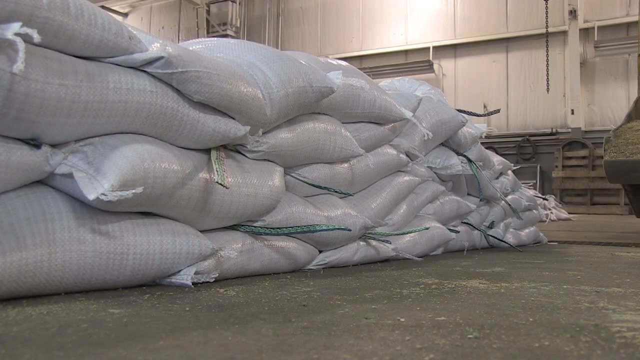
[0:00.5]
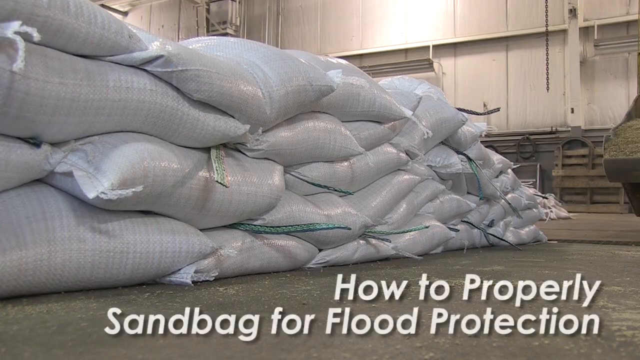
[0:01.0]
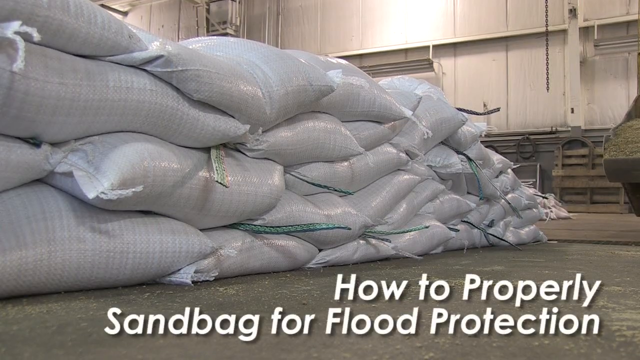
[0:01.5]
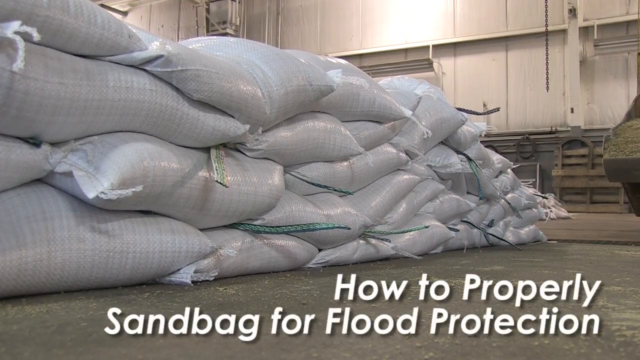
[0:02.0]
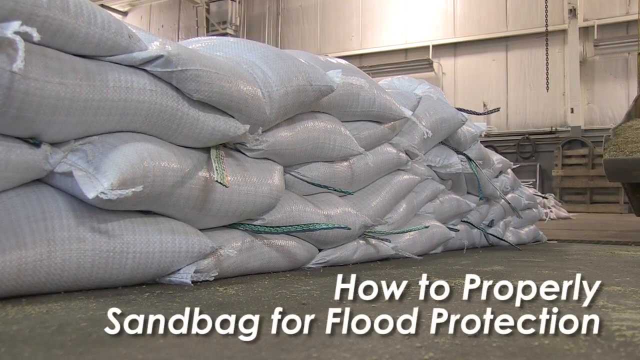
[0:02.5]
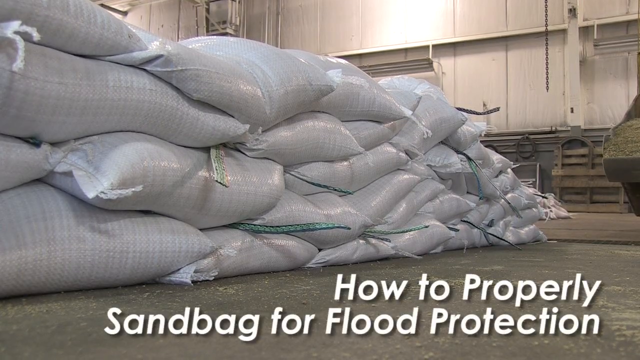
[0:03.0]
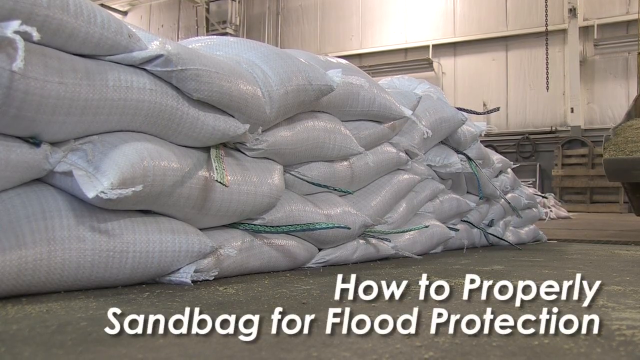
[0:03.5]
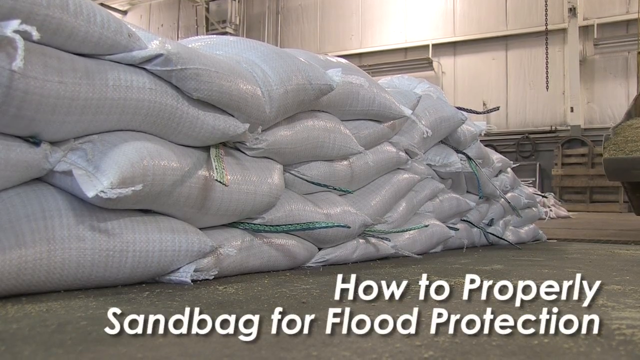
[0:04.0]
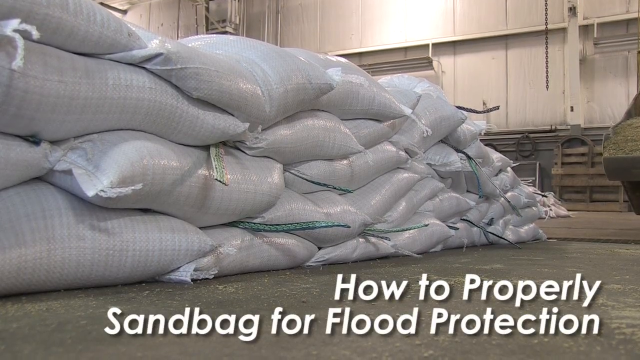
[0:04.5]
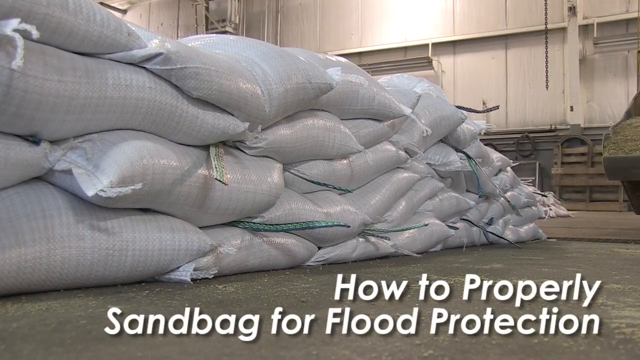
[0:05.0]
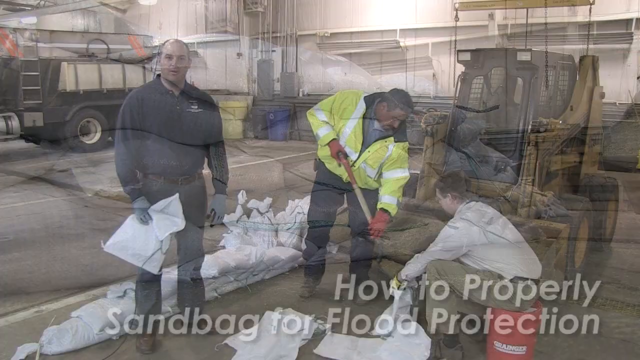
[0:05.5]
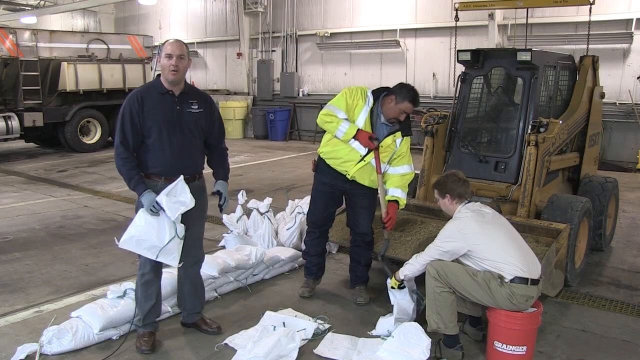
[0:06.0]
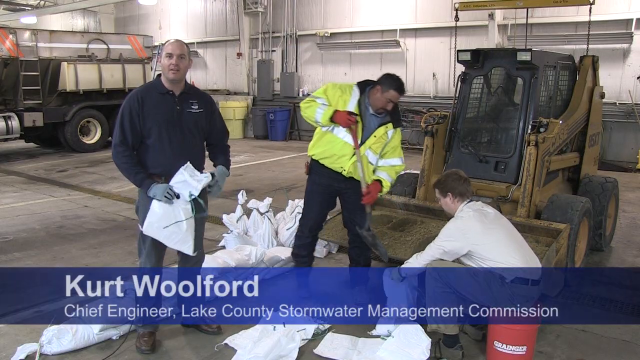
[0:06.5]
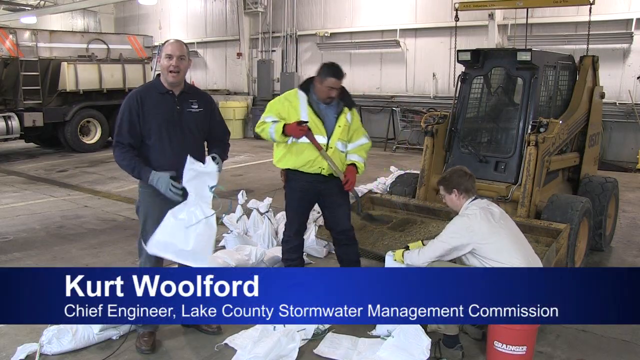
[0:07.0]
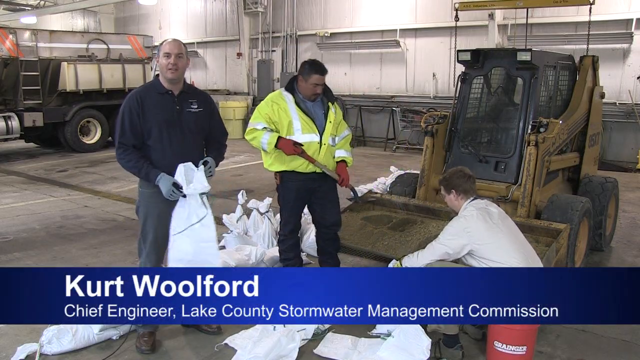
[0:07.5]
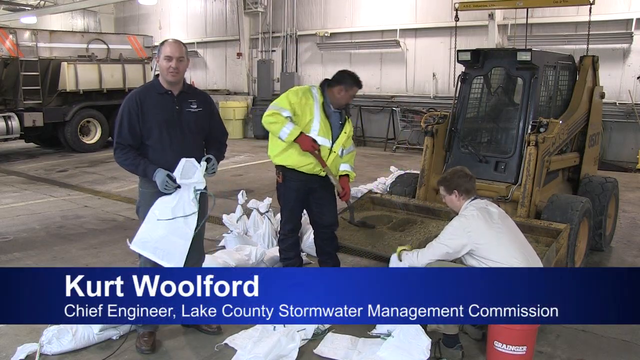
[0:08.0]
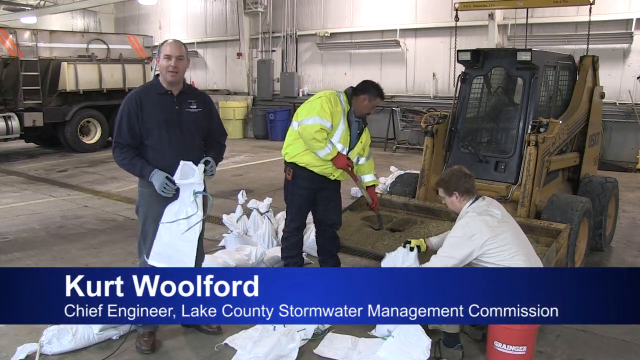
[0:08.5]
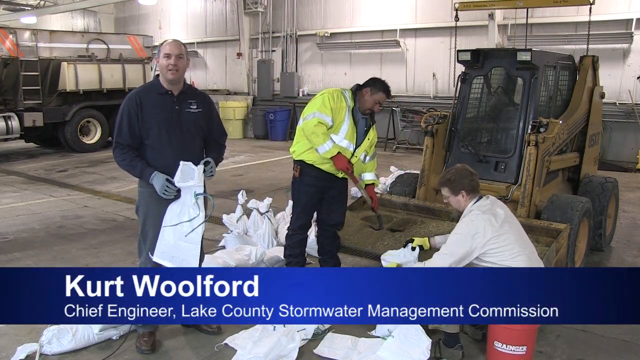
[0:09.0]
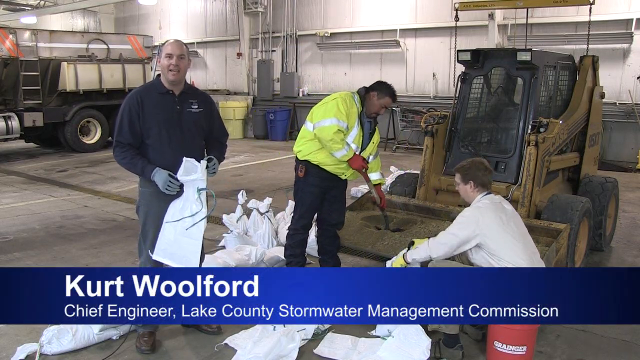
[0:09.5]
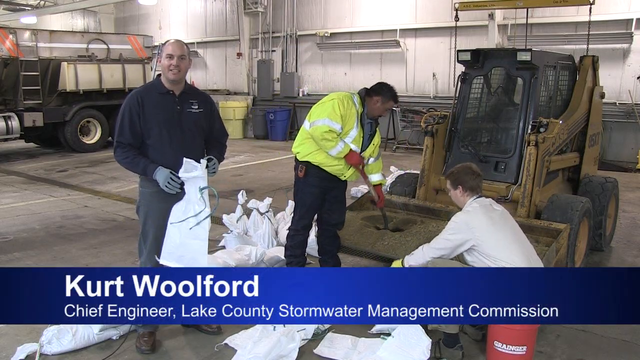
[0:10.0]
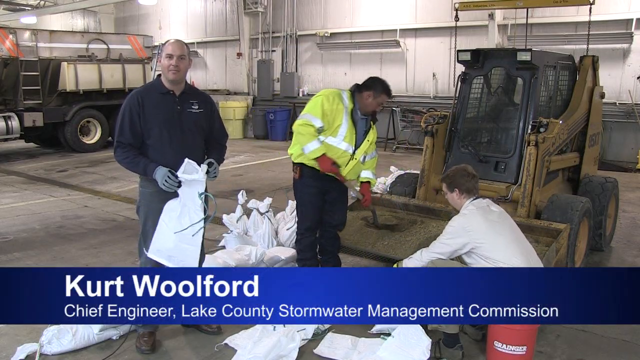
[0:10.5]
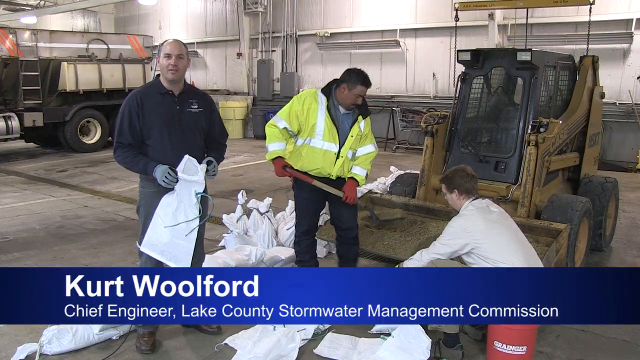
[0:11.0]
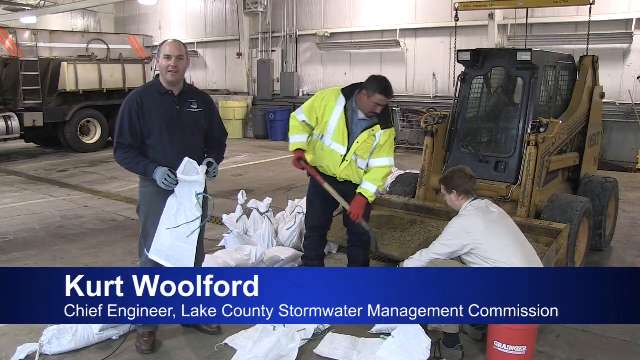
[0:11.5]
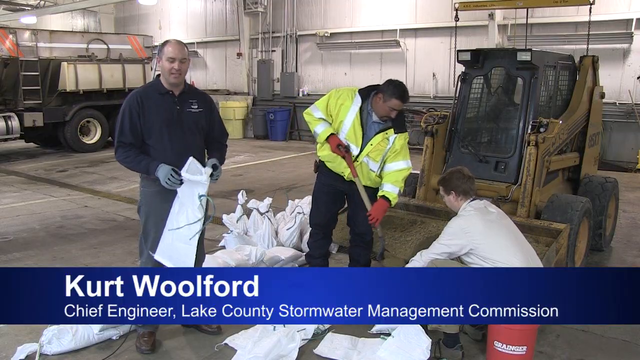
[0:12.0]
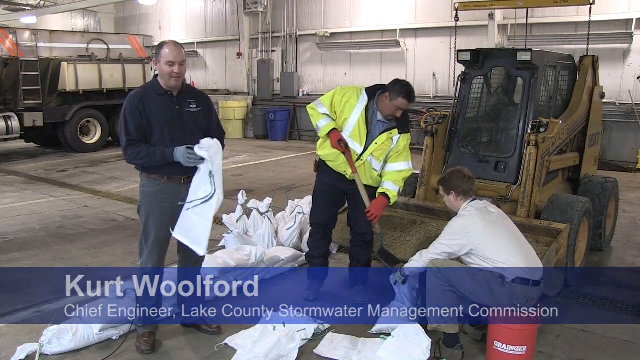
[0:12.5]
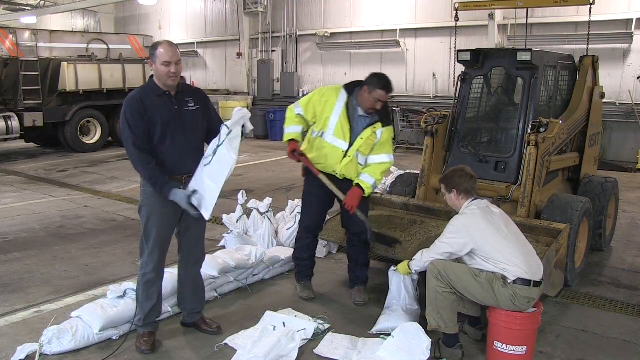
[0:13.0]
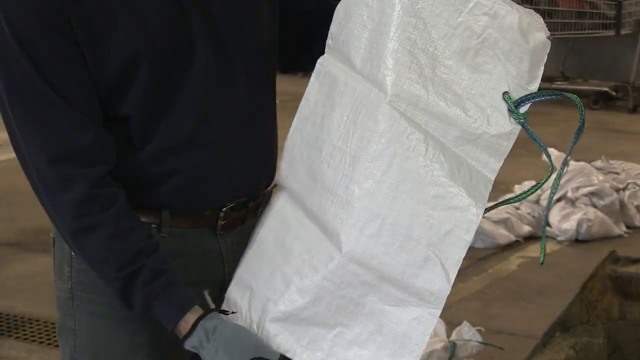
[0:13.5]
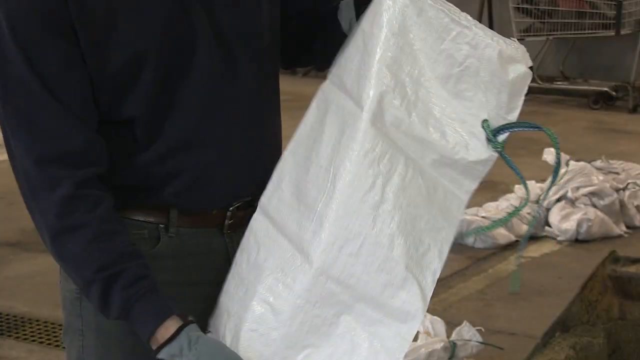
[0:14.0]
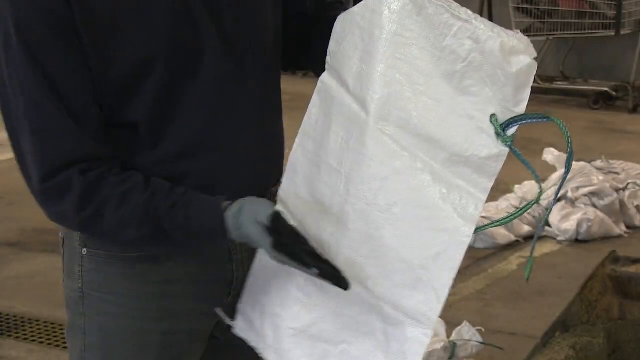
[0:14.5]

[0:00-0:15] The video opens with a title picture of filled sandbags and the words "How to properly sandbag for flood protection". A speaker from a county stormwater management begins talking. He holds an empty sandbag while, behind him, two people work to fill a sandbag. The scene is inside a warehouse with plenty of sand, some of it placed in an automatic shovel. There are plenty of filled sandbags, some empty ones, and some being filled.